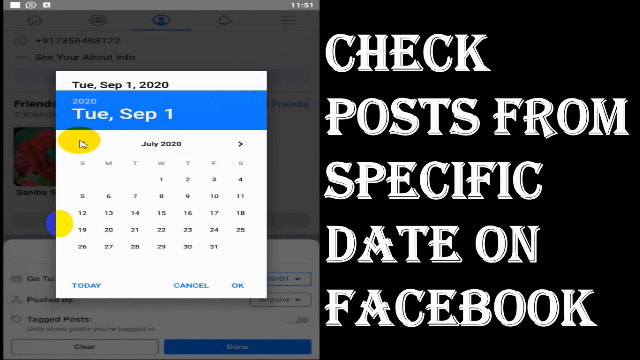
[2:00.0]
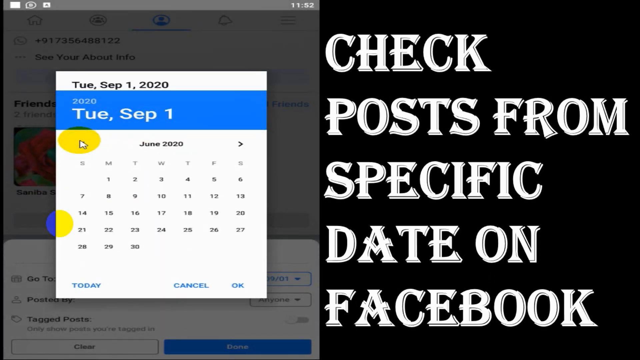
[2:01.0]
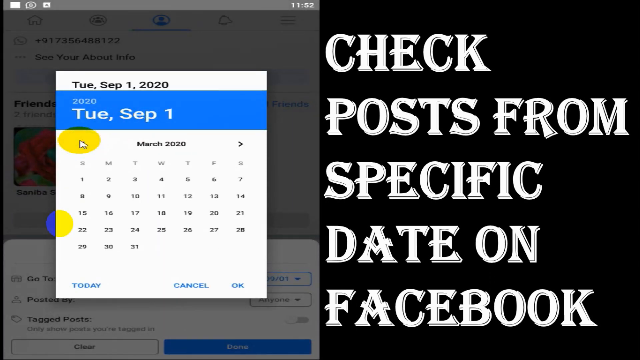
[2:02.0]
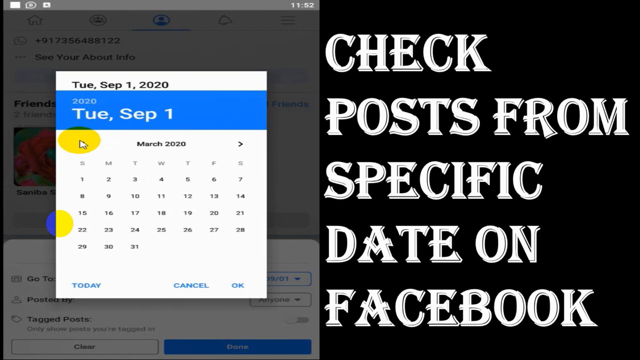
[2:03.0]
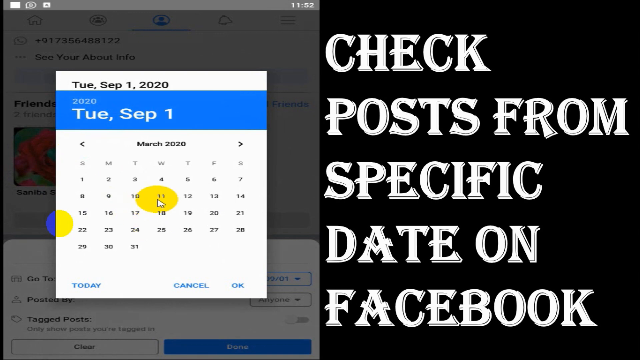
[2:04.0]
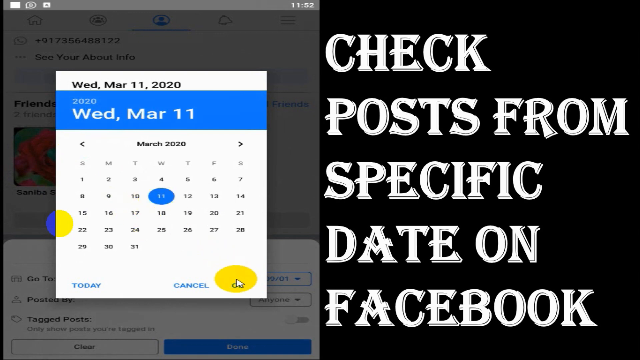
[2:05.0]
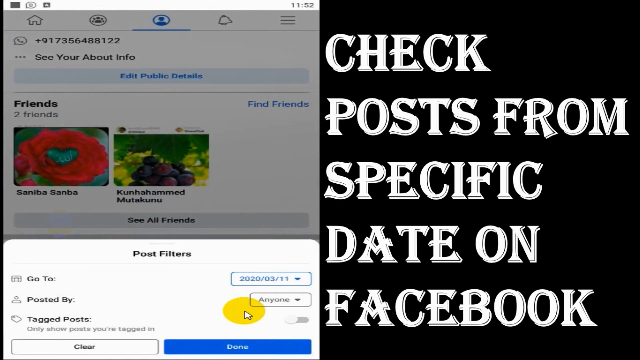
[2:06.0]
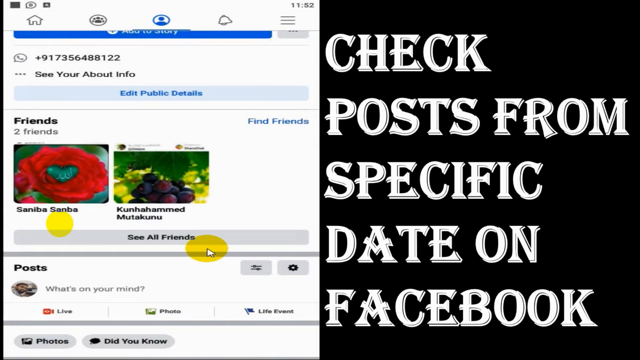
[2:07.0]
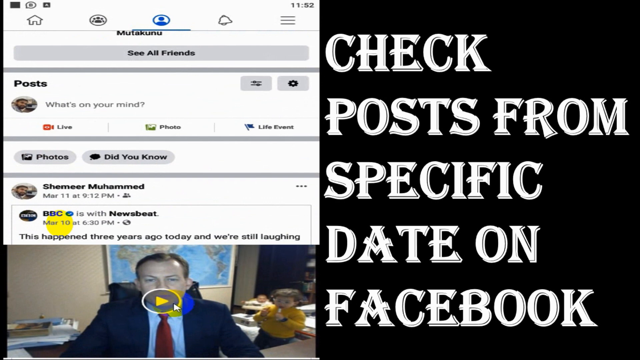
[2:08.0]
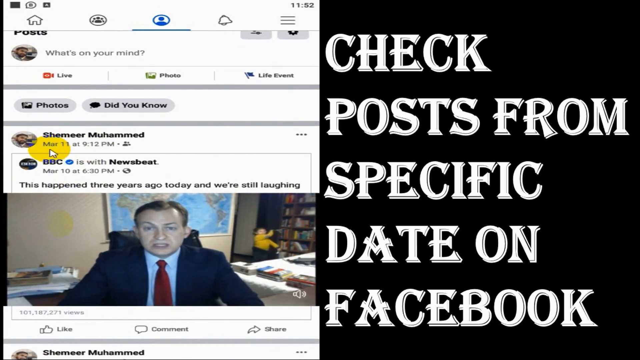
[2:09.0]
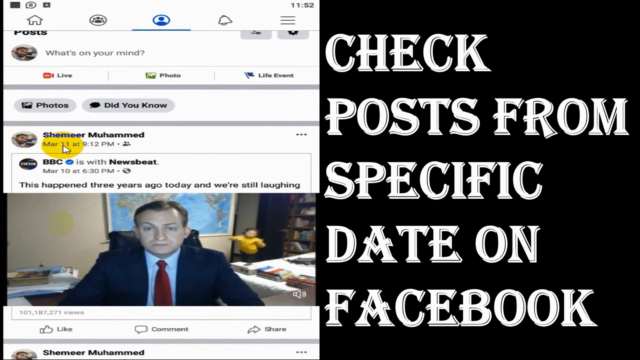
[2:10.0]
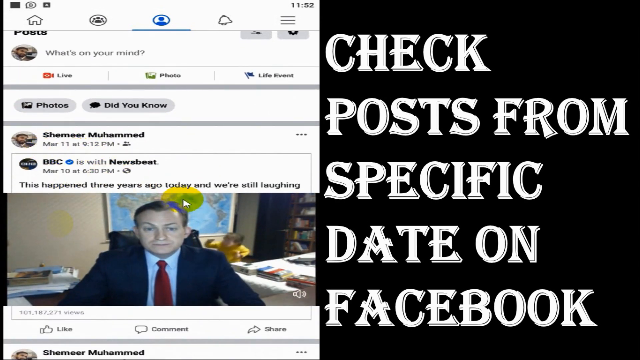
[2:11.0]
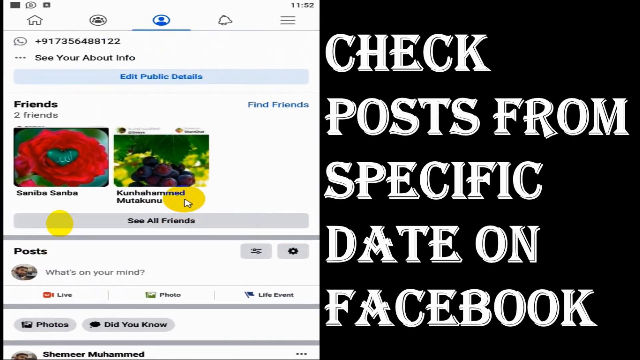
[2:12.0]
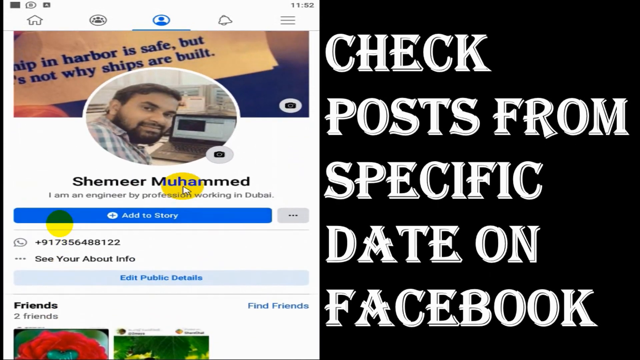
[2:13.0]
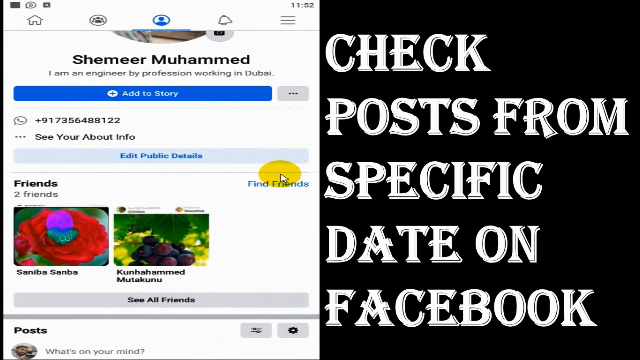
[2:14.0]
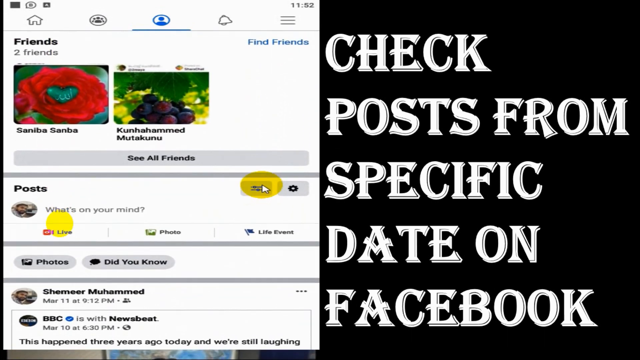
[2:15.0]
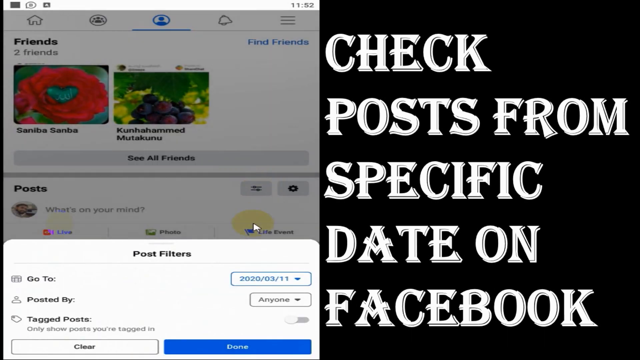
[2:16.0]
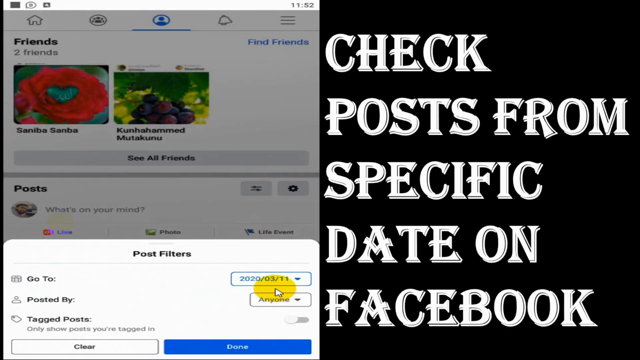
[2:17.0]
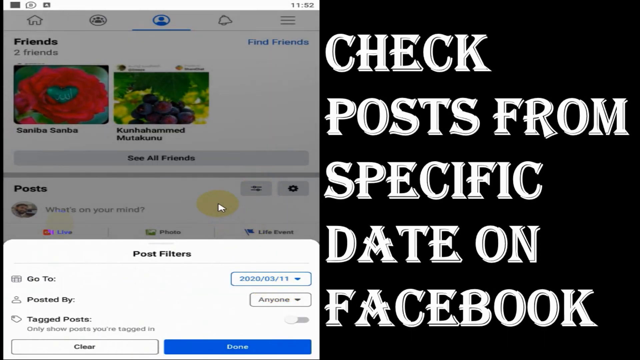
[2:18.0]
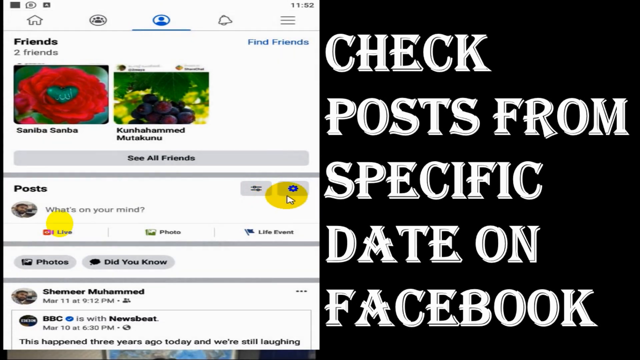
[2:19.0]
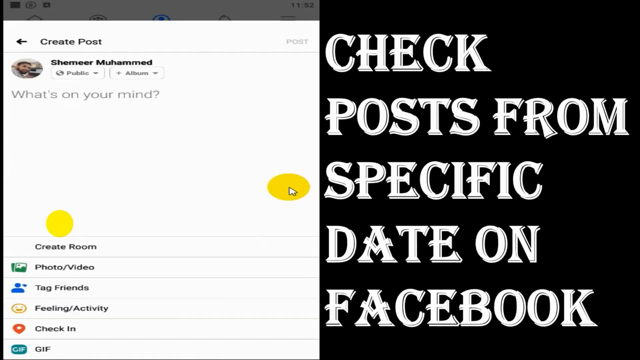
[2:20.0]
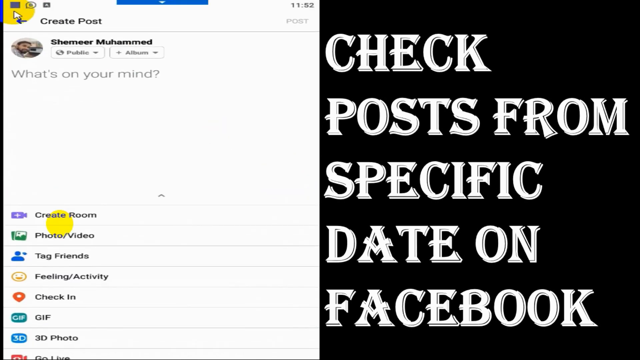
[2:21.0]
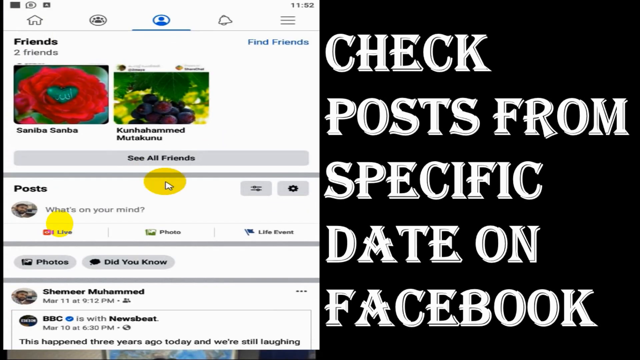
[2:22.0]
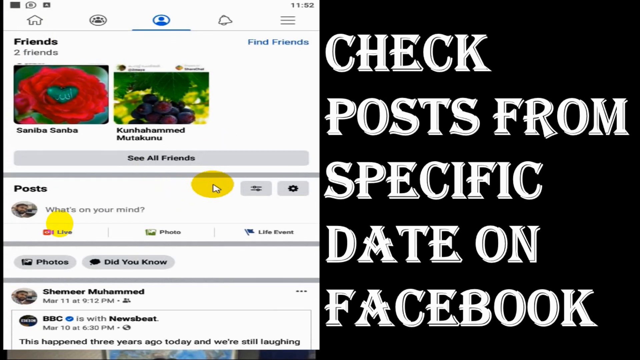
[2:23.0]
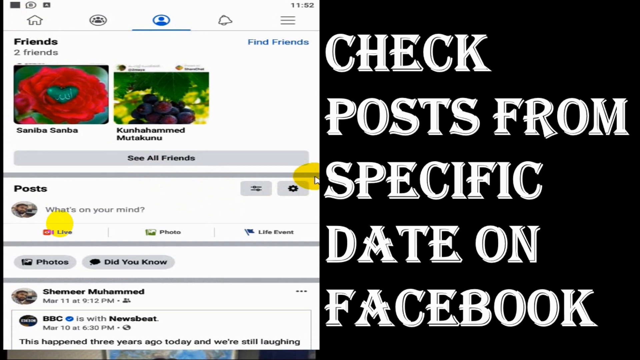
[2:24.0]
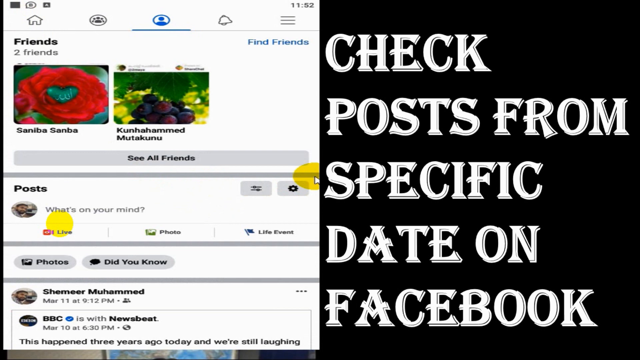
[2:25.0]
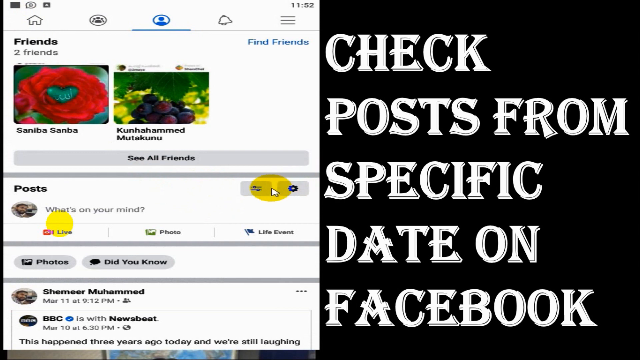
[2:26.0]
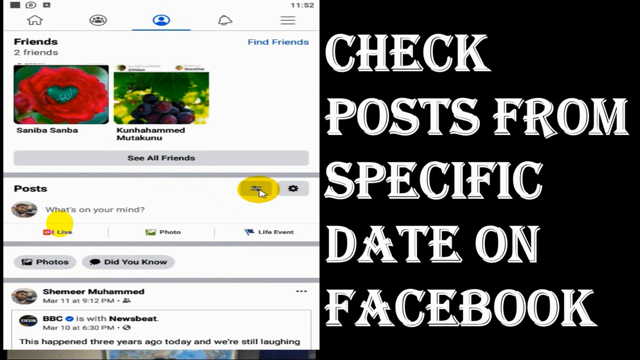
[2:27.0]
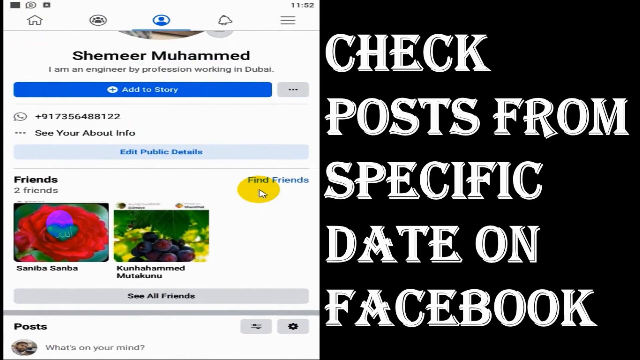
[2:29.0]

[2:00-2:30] Facebook is on the left, with the words "check posts from specific date on Facebook" on the right in white text over a black background. A cursor with a yellow circle around it clicks the left-facing arrow on the calendar to go back in time until March 2020 is selected. The 11th is clicked, causing a blue circle to appear. OK is clicked in the lower right corner of that window, making it go away, and done is clicked at the bottom of the post filters window, making it go away too. The main Facebook feed is scrolled down, and the cursor points at the date under the post being shown. The Facebook window is scrolled back up a little, then all the way up, then back down to the hamburger menu, which brings up the post filters window. The cursor clicks off that window to make it go away. The button next to the hamburger is clicked, bringing up the create post field, and the back button is clicked, making it go away. The cursor hovers over the hamburger menu, and the page is scrolled up slightly and then back down.